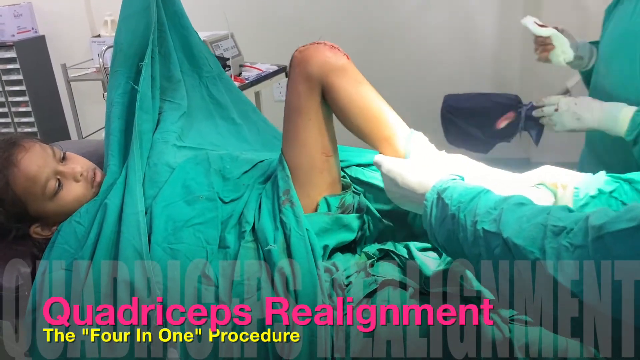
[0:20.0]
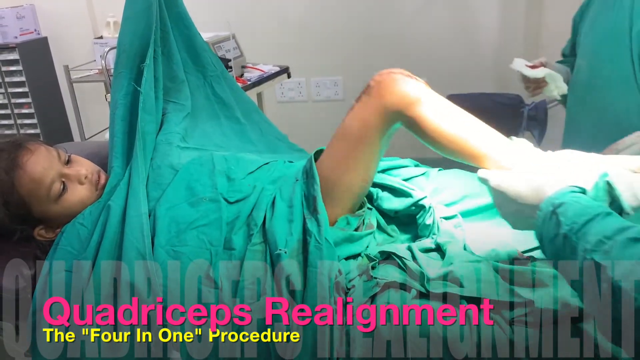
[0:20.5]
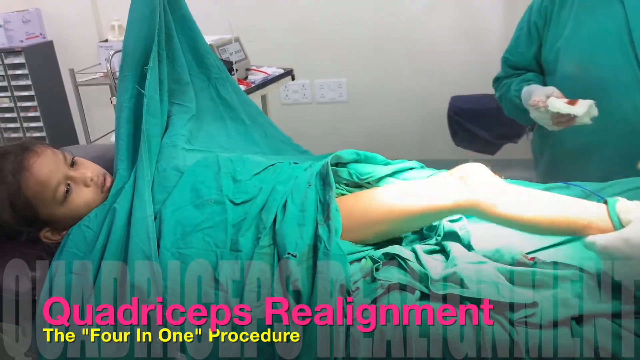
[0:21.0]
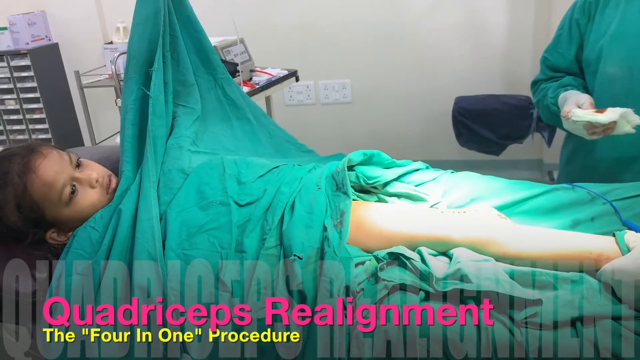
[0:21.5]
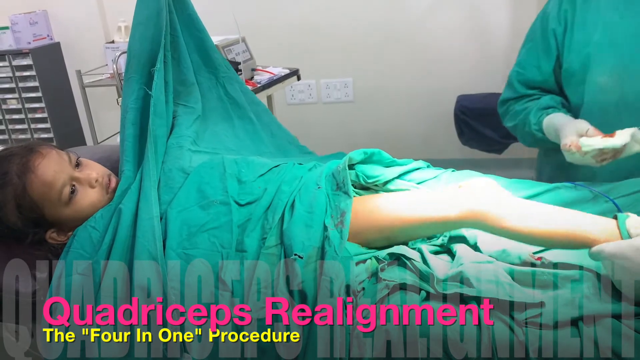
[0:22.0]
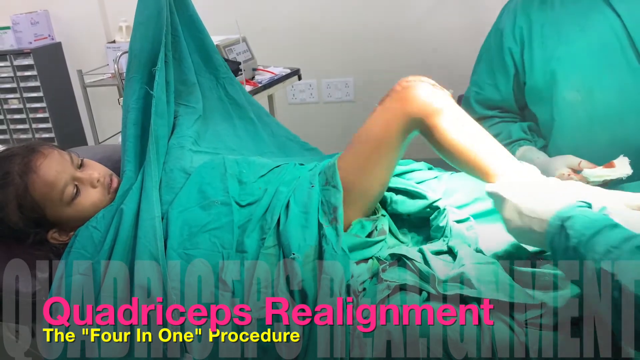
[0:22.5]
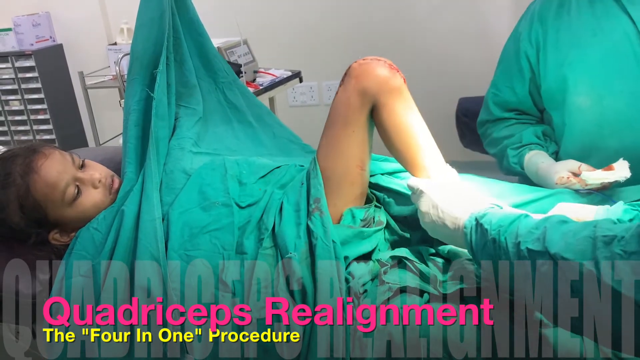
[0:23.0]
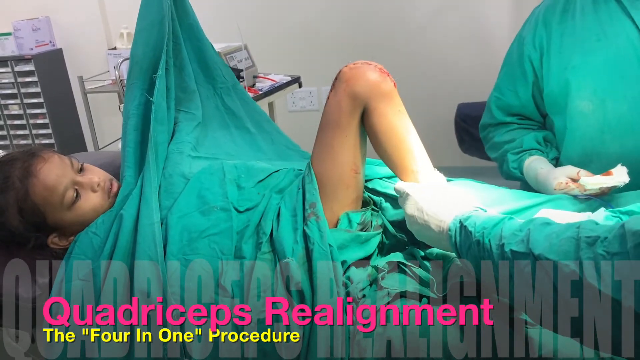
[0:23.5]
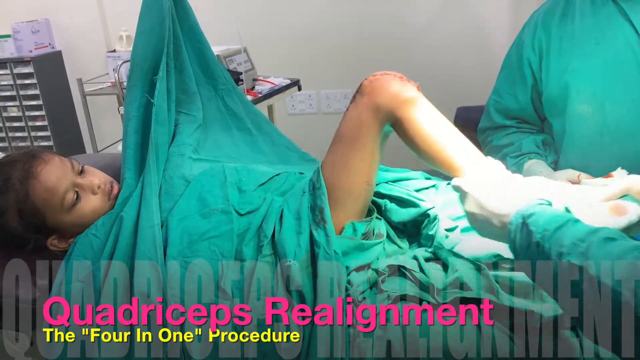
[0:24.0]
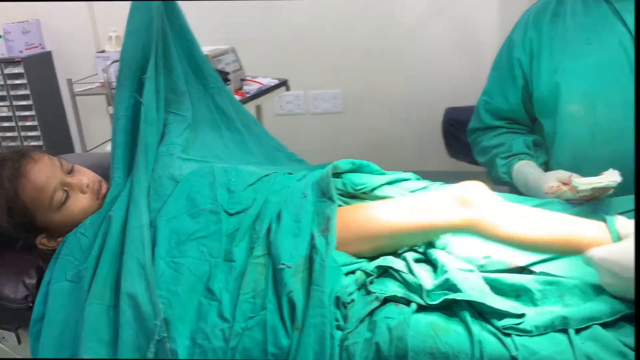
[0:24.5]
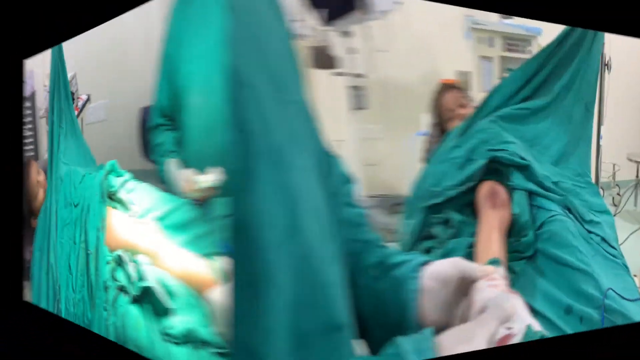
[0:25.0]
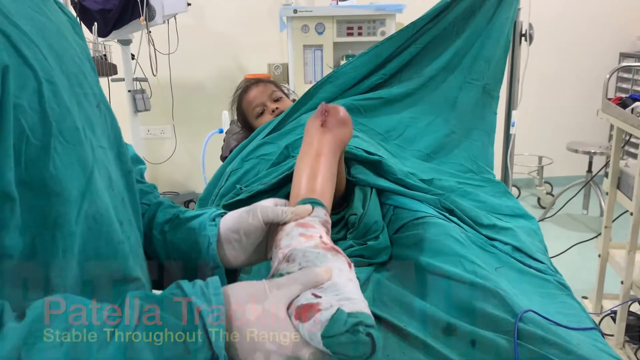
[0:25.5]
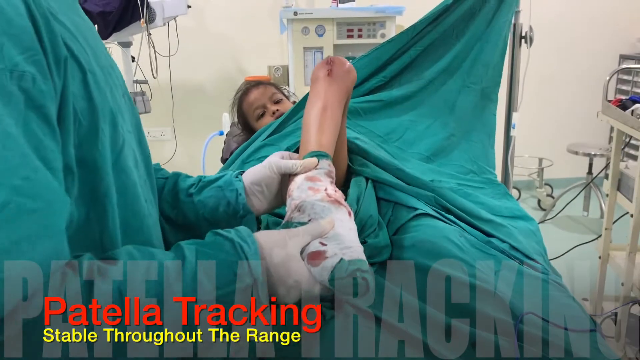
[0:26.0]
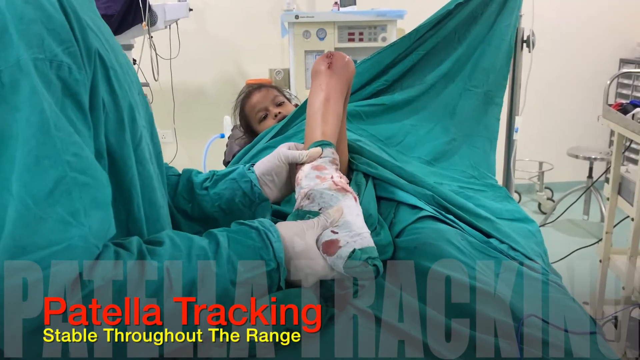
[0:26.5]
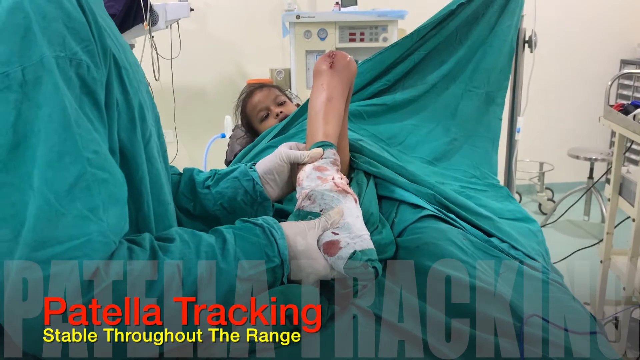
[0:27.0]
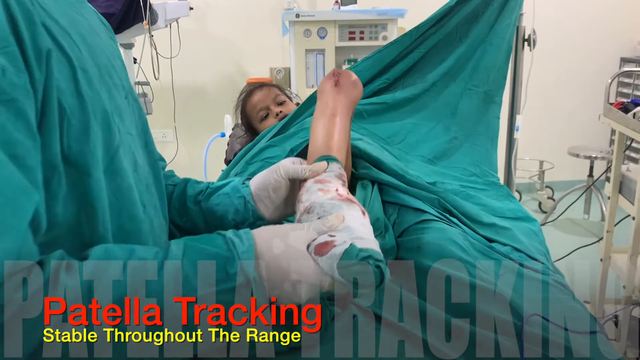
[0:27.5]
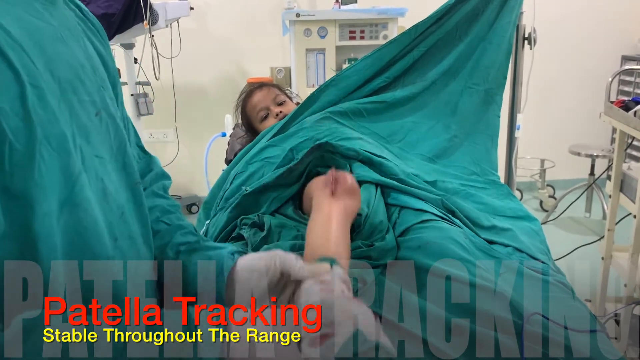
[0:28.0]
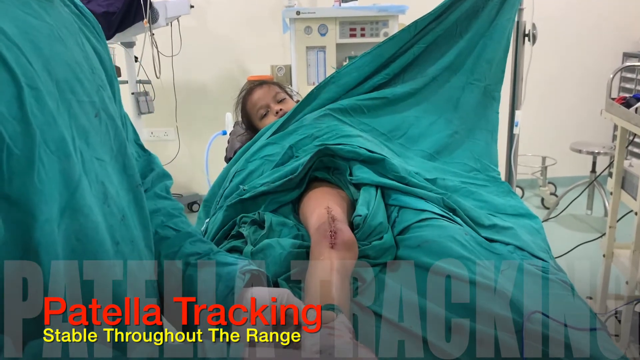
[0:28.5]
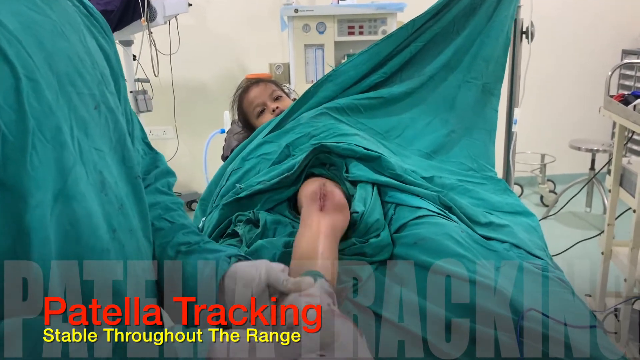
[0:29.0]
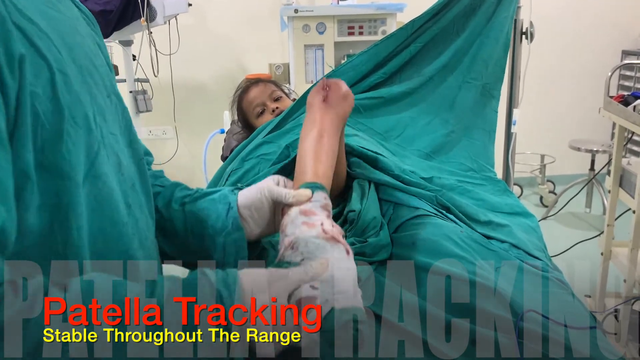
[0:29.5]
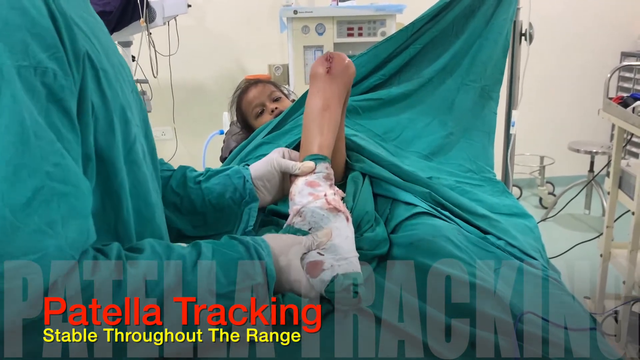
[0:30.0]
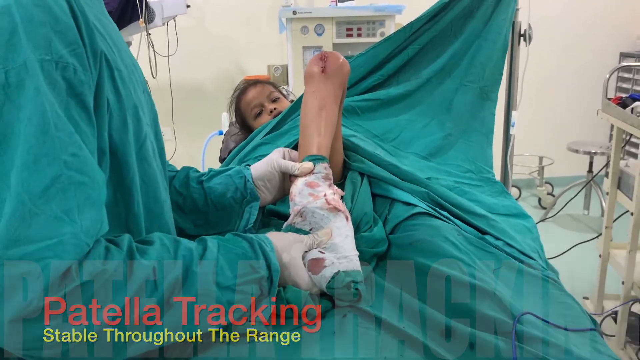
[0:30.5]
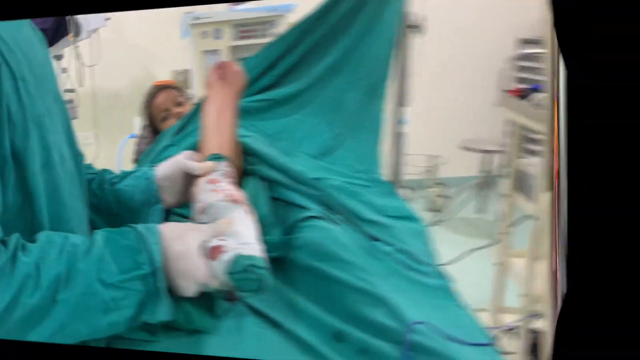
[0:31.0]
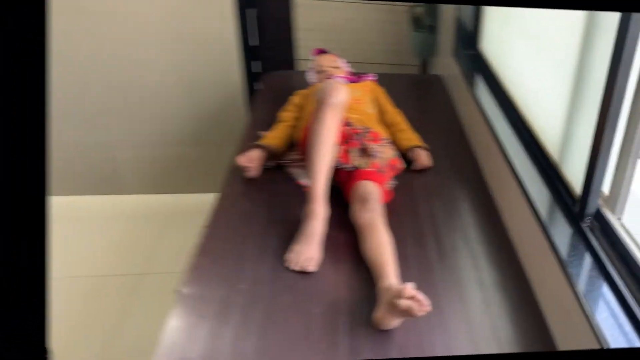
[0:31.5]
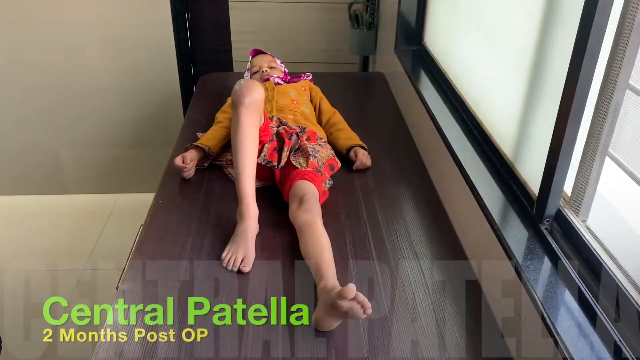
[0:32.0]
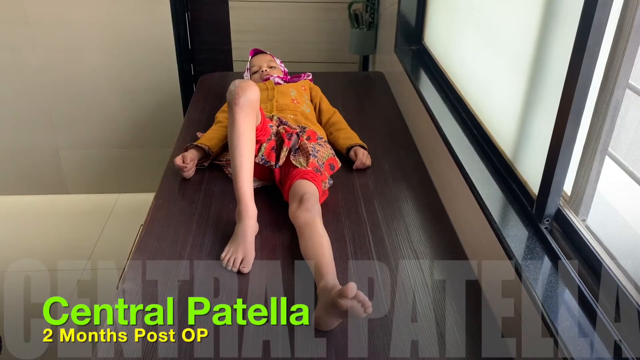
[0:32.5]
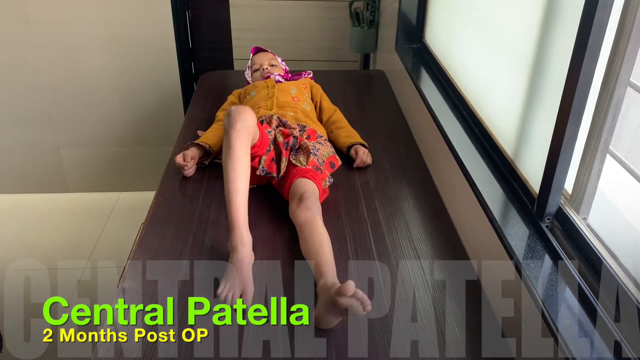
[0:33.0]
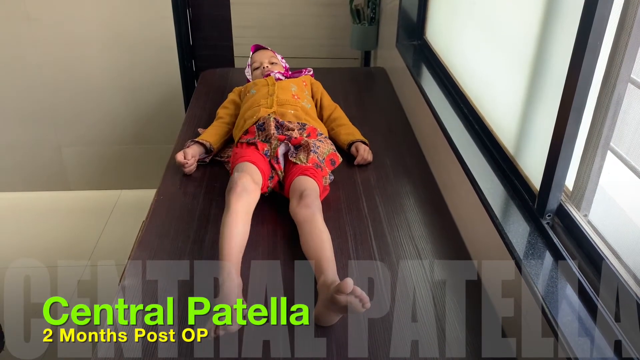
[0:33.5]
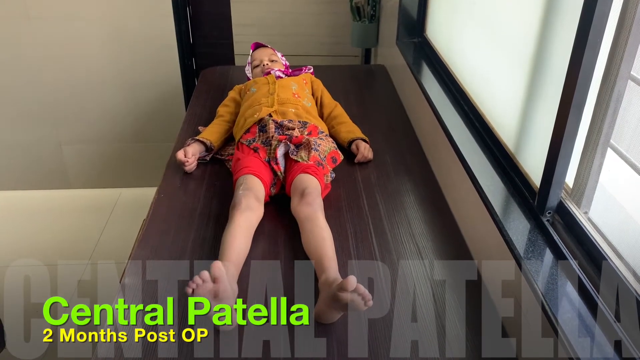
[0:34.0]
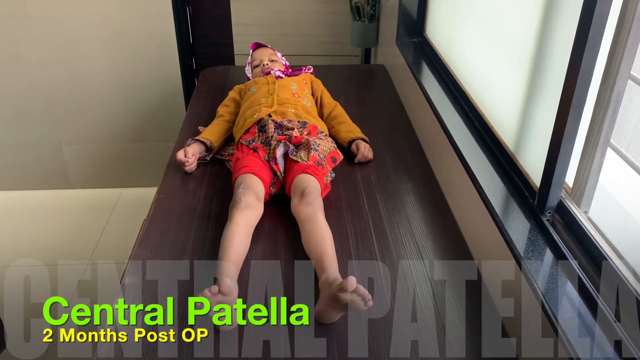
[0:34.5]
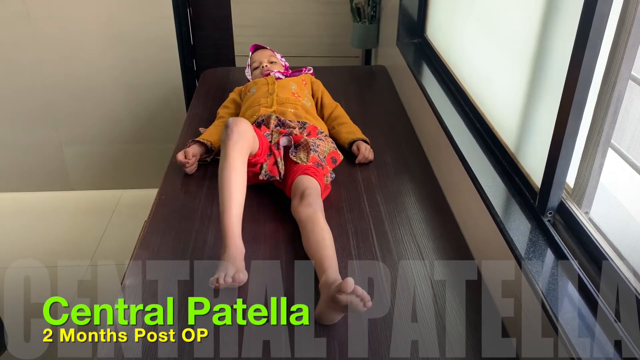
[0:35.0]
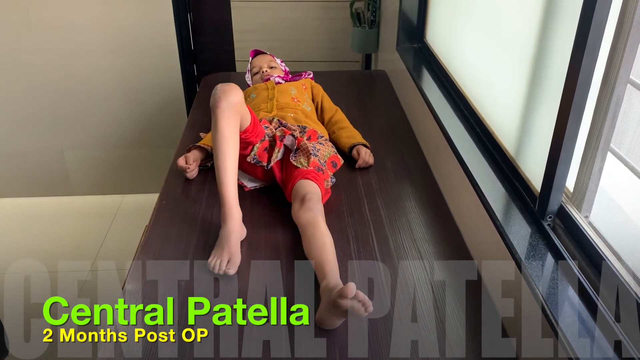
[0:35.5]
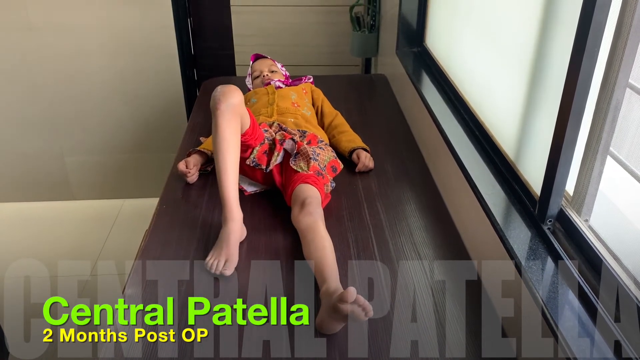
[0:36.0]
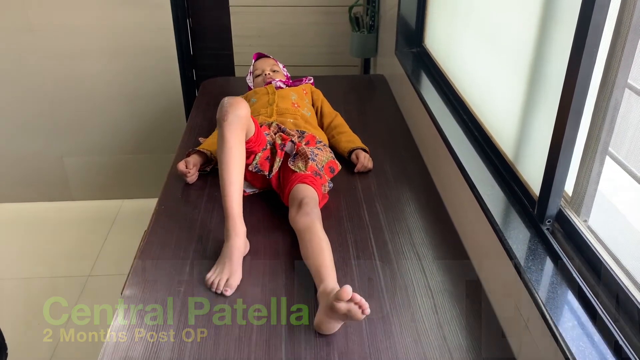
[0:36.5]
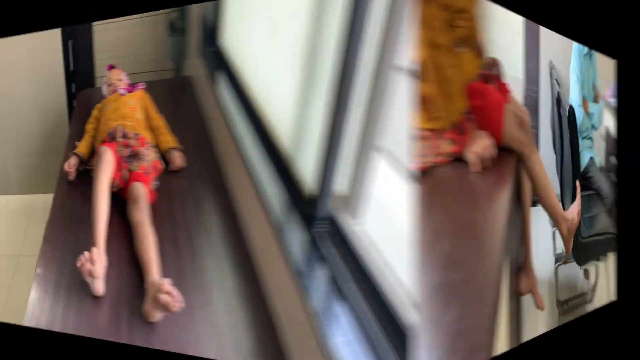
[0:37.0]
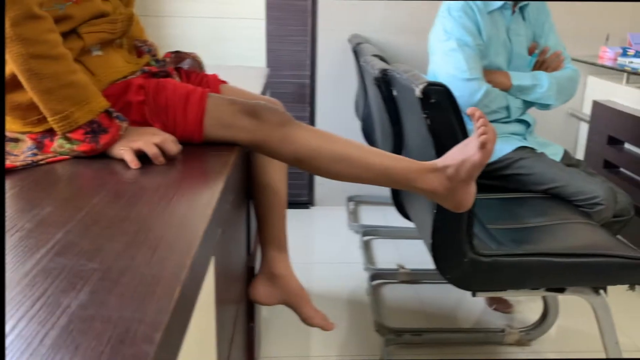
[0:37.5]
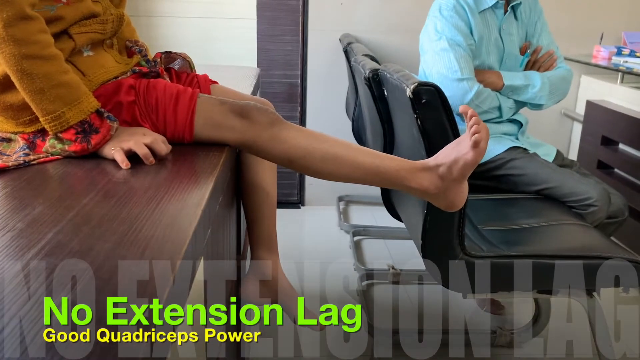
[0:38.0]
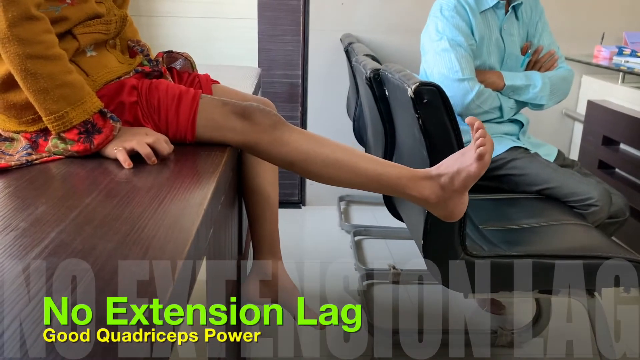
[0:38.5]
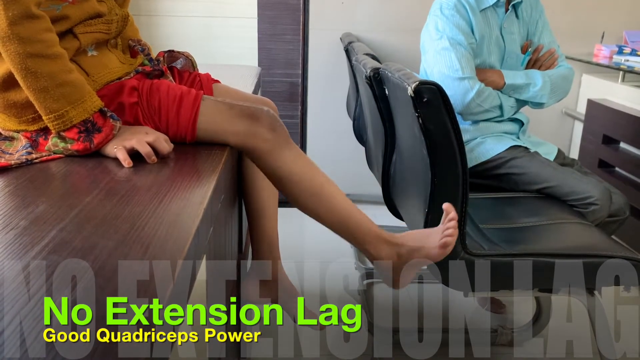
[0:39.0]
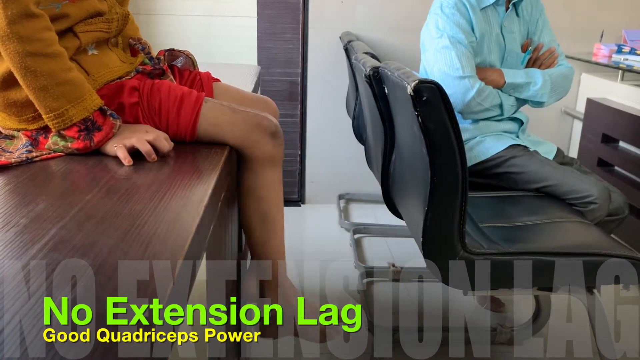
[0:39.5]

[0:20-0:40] The 10-year-old girl is in surgery; she looks pale but awake. The surgeon bends her knee. A pink title reads "quadriceps realignment", followed in yellow by "the 4-in-1 procedure". The surgeon takes her knee from the bent position and straightens it. A second surgeon holds a cloth with blood on it. The surgeon continues to bend and then stretch out the knee. The surgery appears to have been completed, as there is an incision with stitches at the top of her knee. A front shot then shows the girl lying on the surgery bed as the surgeon bends her knee, with the heading "patella tracking, stable throughout the range", showing that the patella is stable when the knee bends after surgery. Next, the girl is shown dressed and lying on a table, wearing a yellow cardigan, orange trousers rolled up, and a purple and white headscarf. She shows her knee three months after the operation, with a central patella in the bent position, the scarring healed and the knee stable. She bends the knee several times. She then sits upright on the table and flexes her knee outstretched with her toes pointed inwards to show the surgeon her movement. On-screen captions read "no extension lag" in green and then, in yellow, "good quadriceps power".